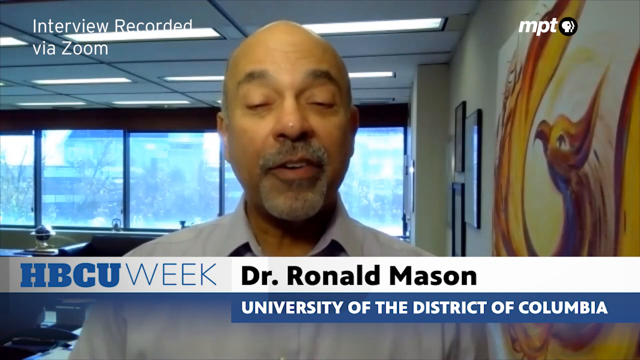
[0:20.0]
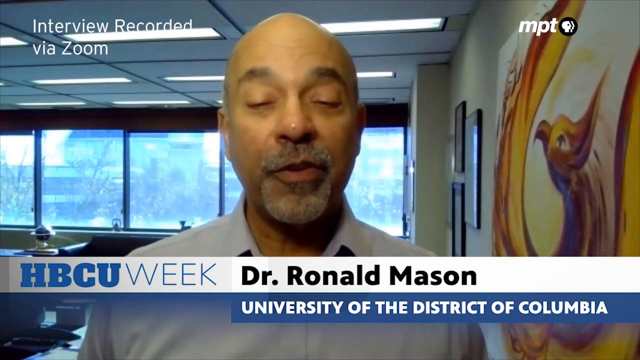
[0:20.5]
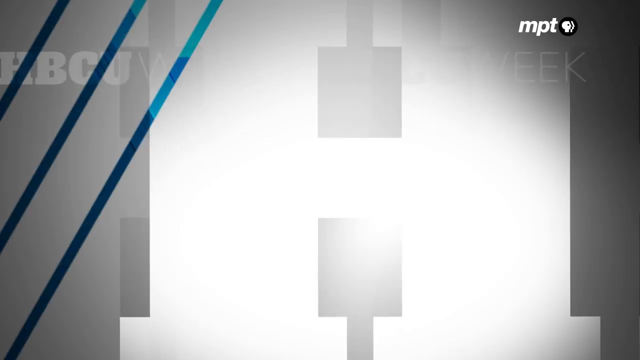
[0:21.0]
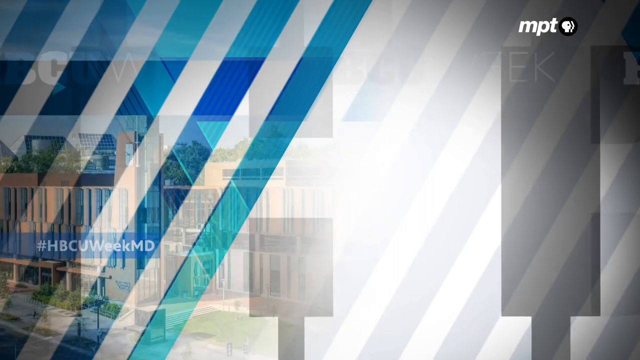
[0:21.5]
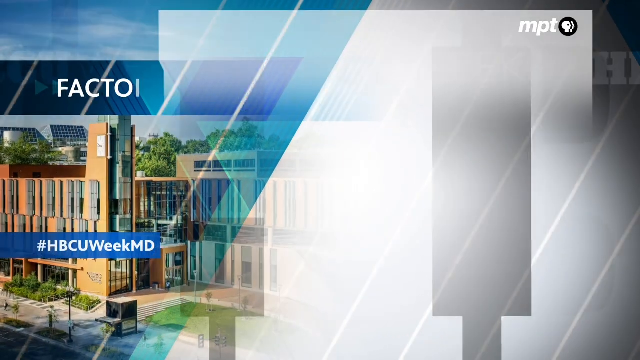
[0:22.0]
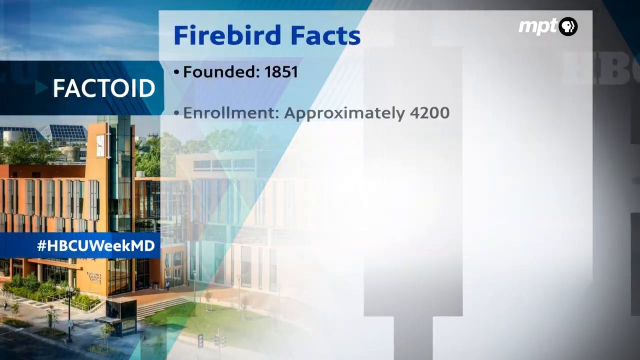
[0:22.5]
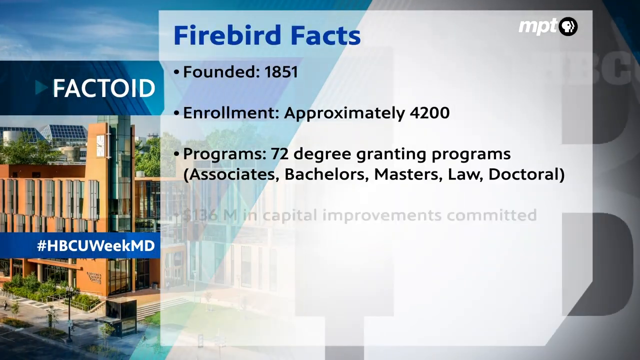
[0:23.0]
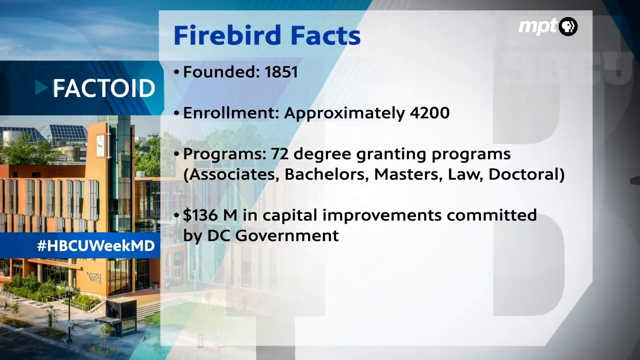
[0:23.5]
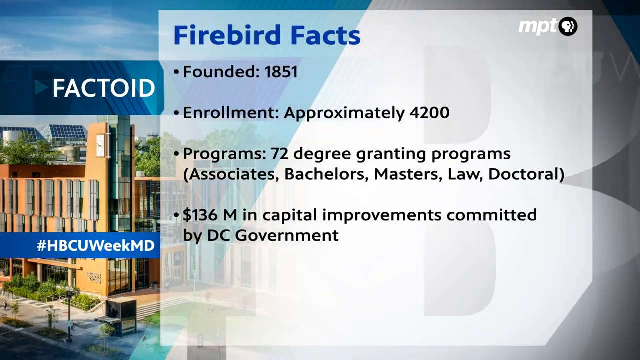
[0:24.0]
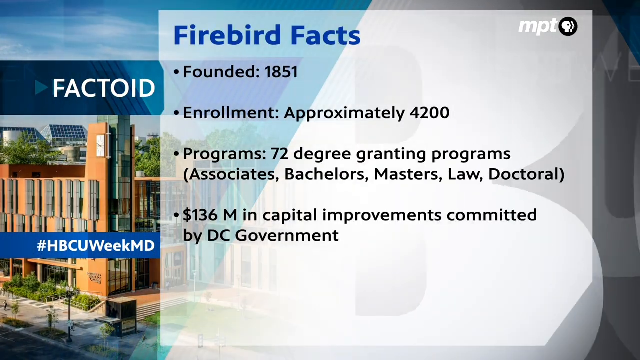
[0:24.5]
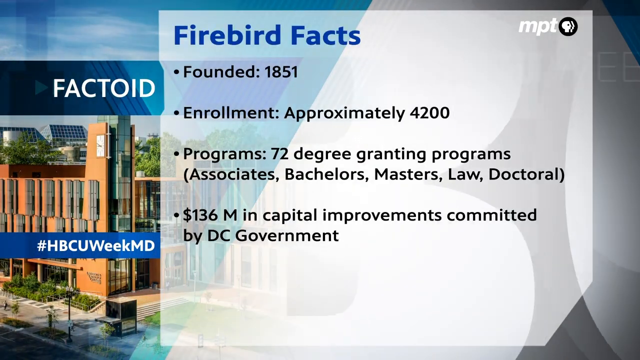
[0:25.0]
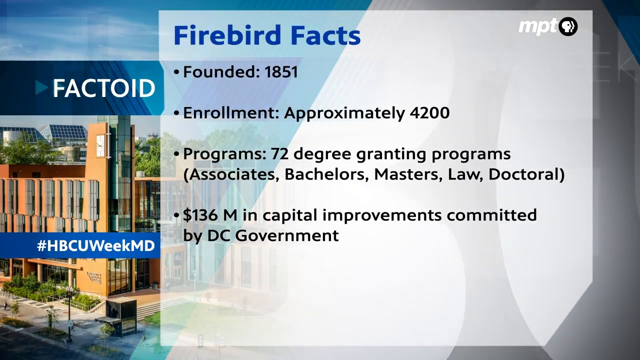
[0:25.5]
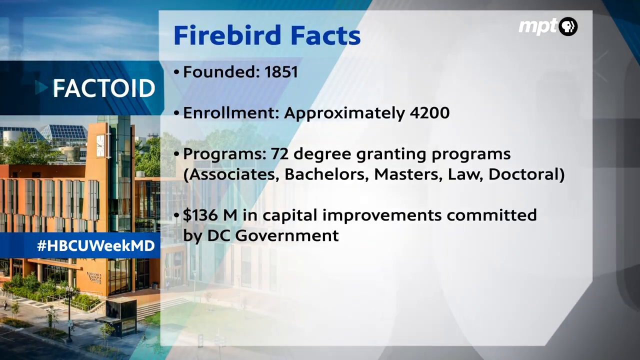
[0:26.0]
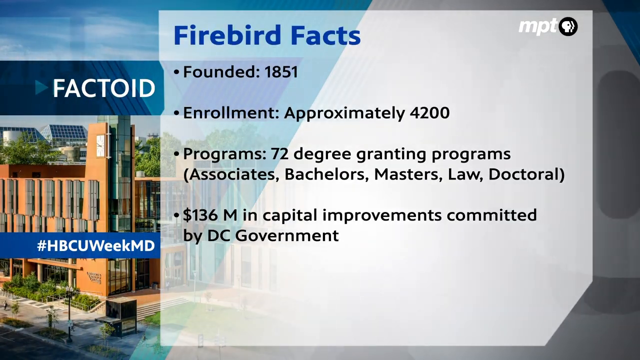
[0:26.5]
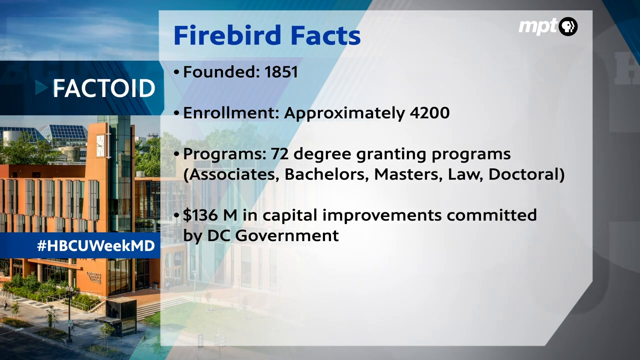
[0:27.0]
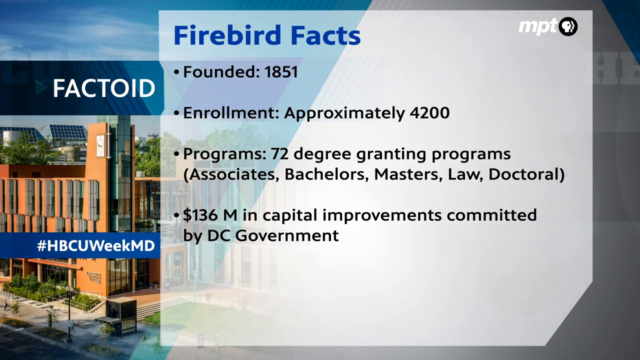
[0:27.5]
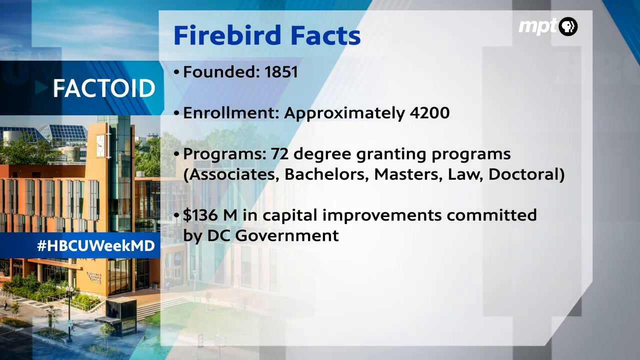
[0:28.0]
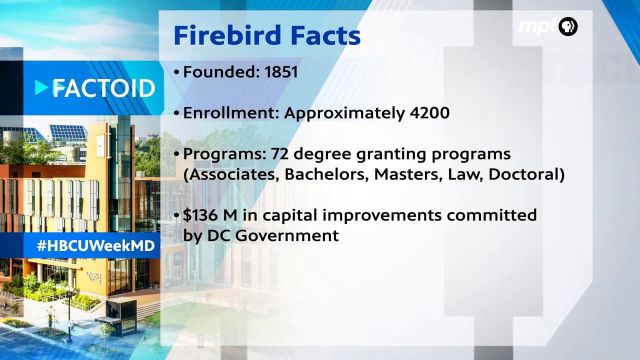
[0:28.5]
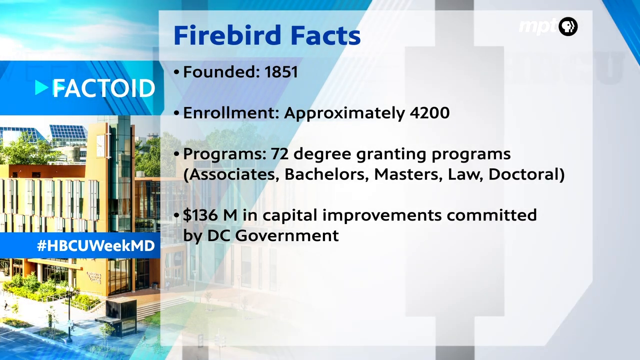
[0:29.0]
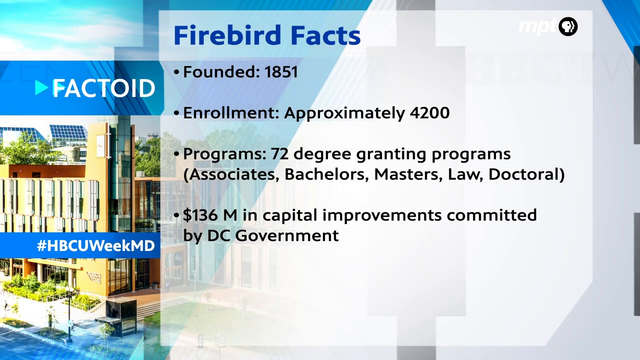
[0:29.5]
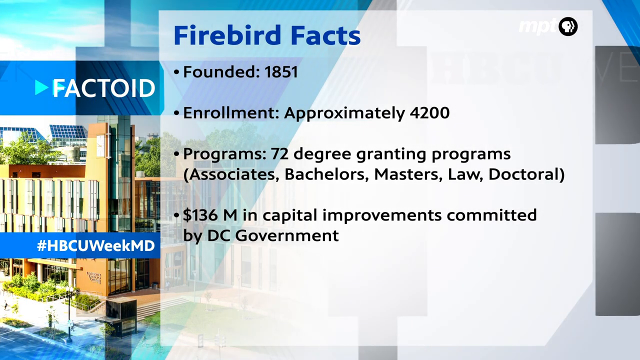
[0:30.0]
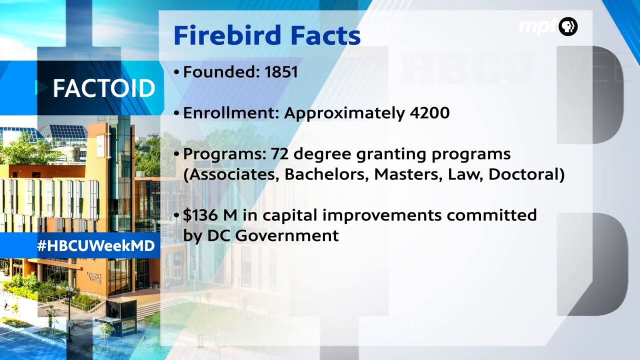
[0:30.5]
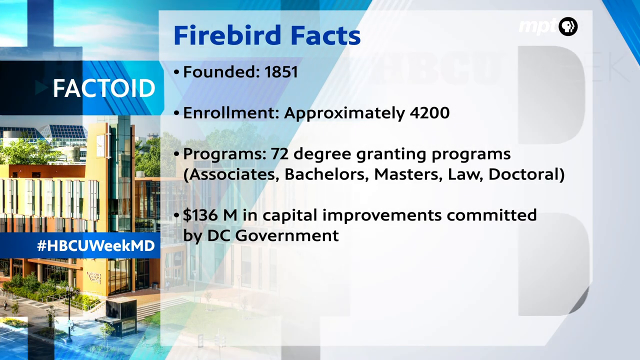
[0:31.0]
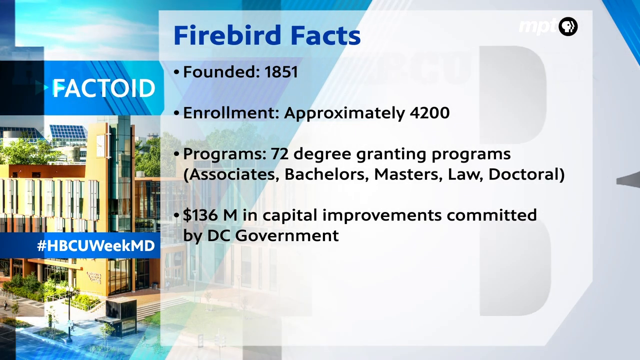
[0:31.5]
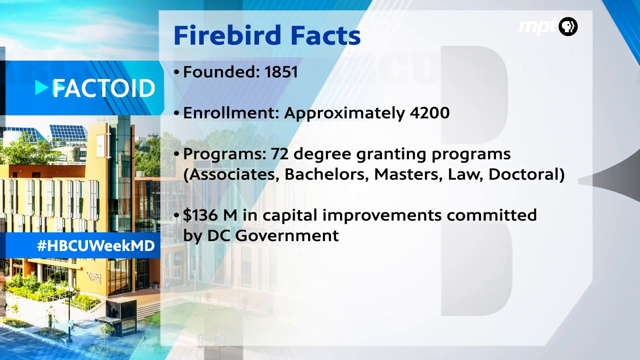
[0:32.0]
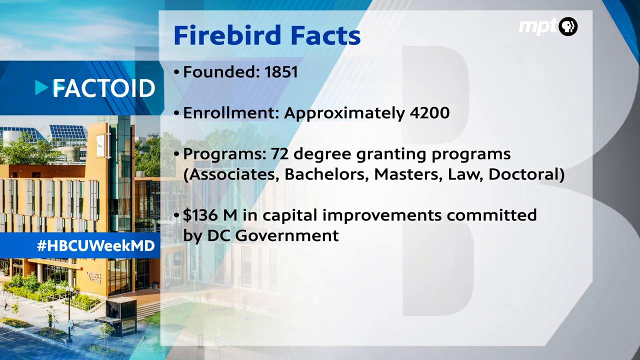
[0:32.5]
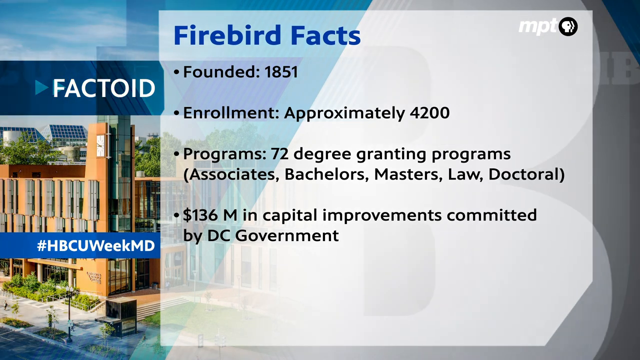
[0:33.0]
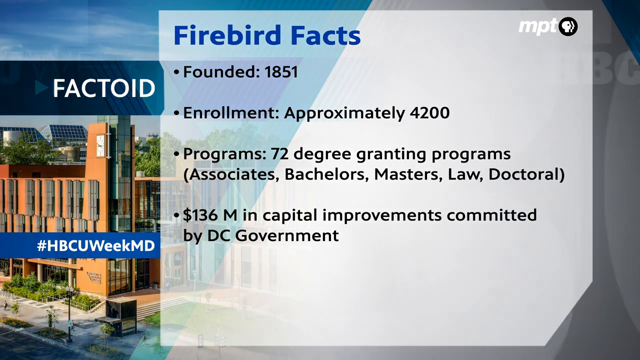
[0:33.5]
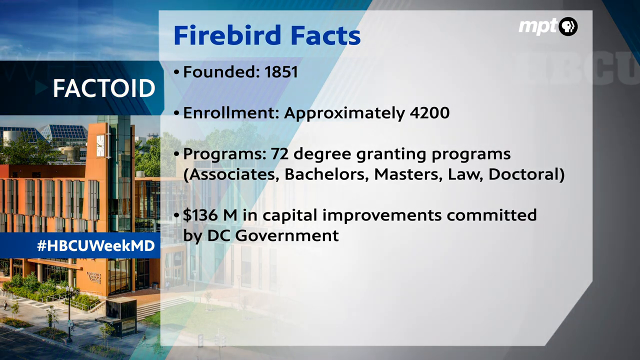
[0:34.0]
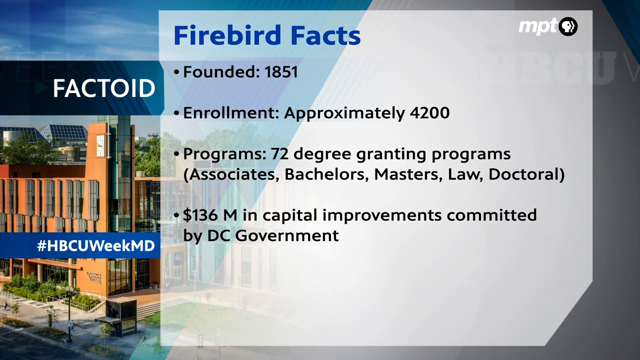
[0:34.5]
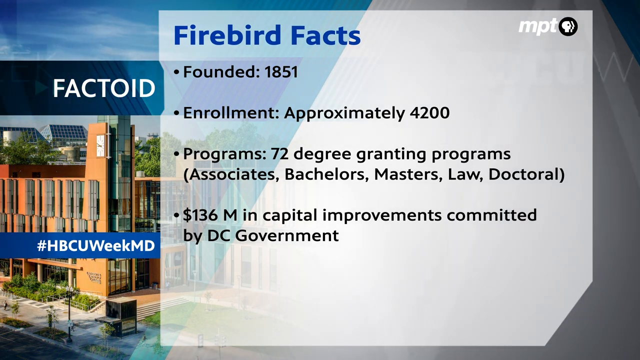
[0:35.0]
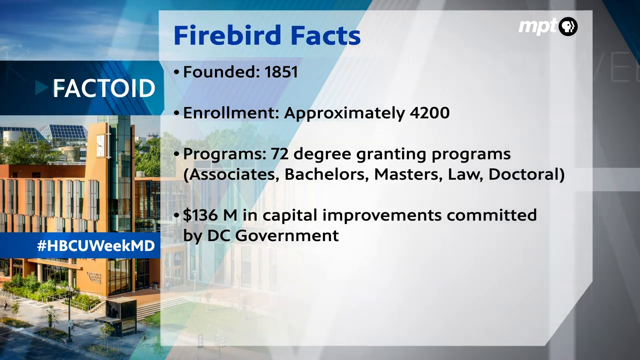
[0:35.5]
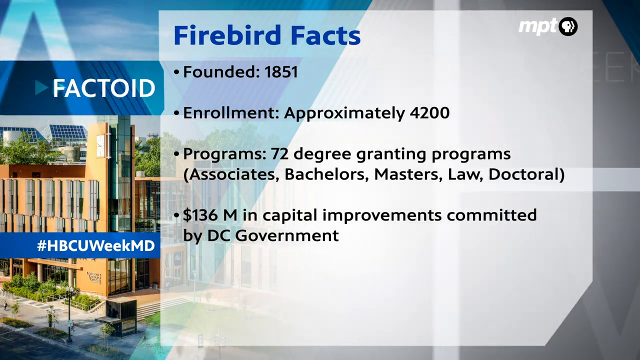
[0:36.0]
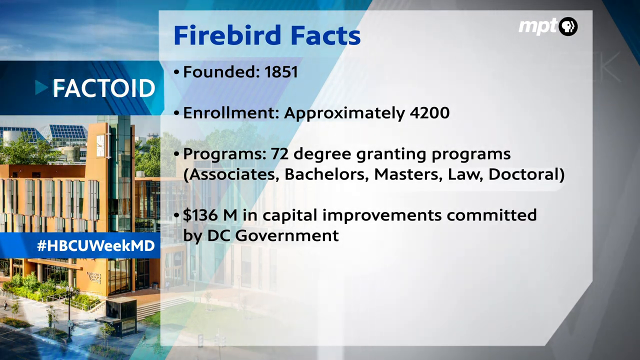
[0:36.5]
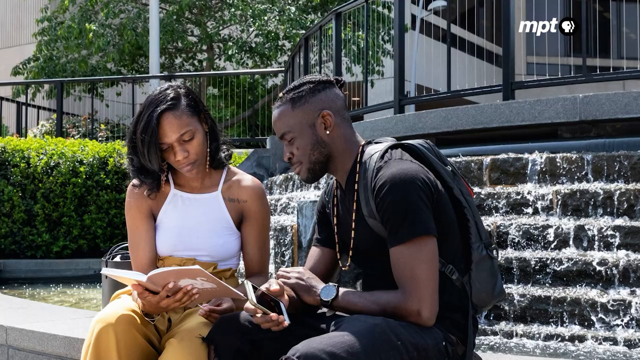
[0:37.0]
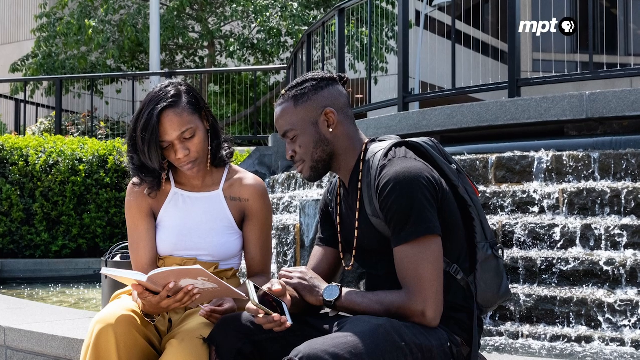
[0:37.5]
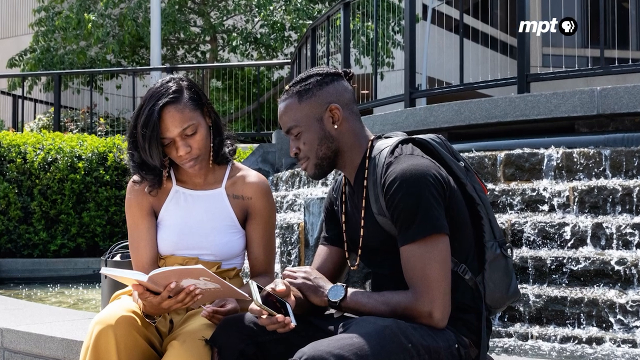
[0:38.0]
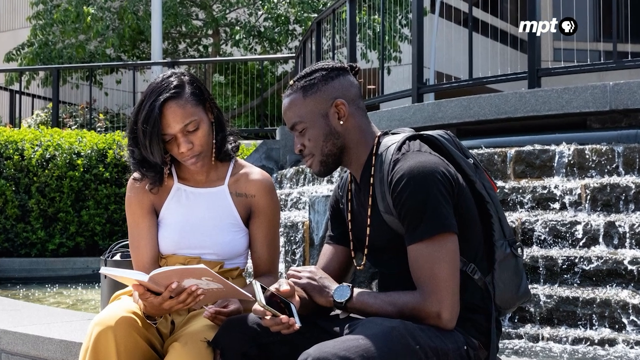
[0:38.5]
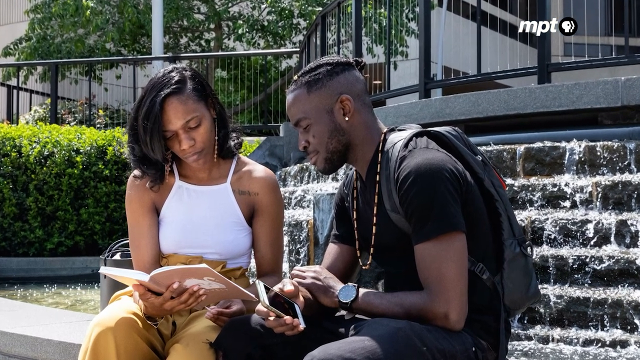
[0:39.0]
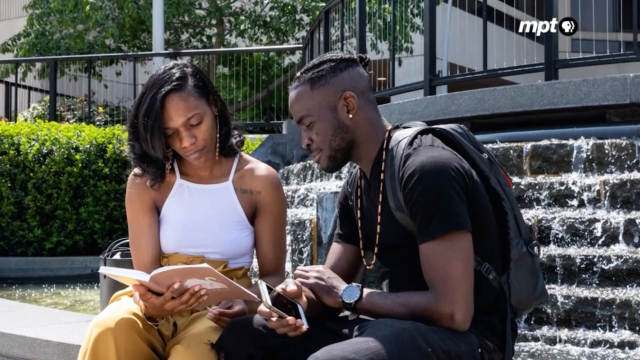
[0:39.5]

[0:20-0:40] Dr. J. Ronald is still speaking when the screen flips to a small picture of the institution with the words "five facts", "factoid" and "#BEC". Facts about the campus then appear in four bullets on a white background: founded in 1851; enrollment approximately 4.2; 72 degree-granting programs (associates, bachelor's, master's, law and doctoral); and $136 million in capital improvements committed by the DC government. Something moves beneath the white background, and it seems Dr. Ronald is the one explaining. The screen then shifts to two Black candidates reading a book together: a female with black hair and a white top, and a male with cornrows wearing a black t-shirt, a black backpack, a necklace and a watch.